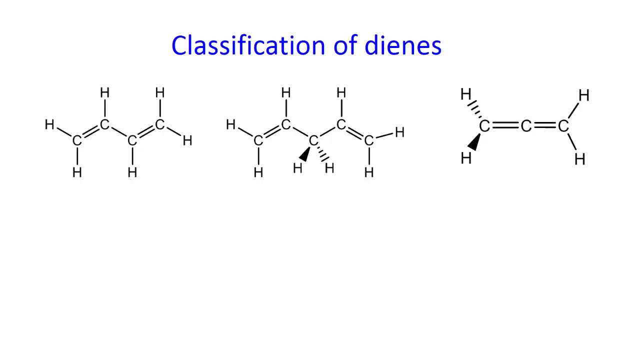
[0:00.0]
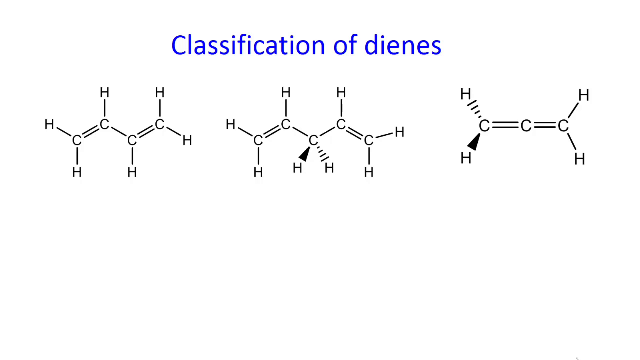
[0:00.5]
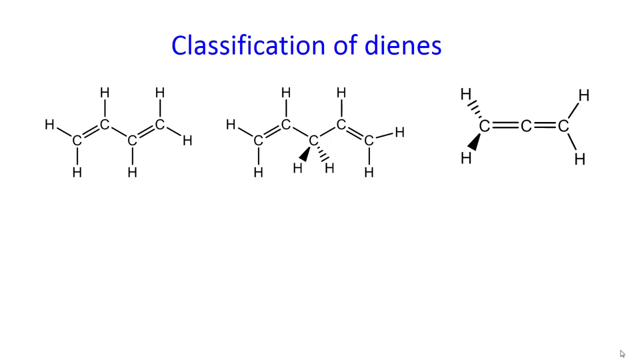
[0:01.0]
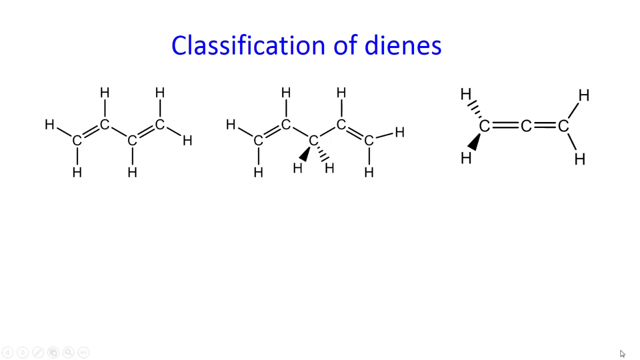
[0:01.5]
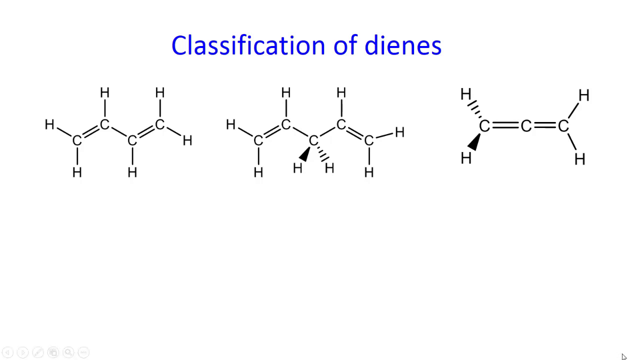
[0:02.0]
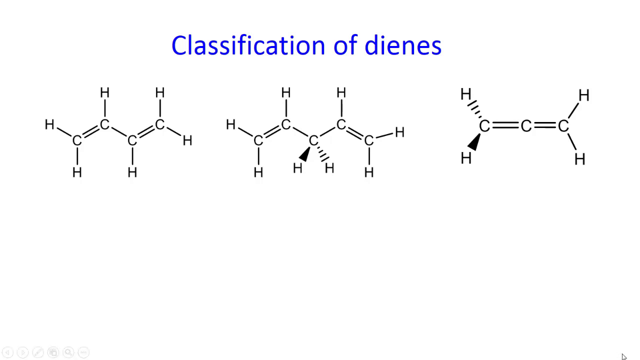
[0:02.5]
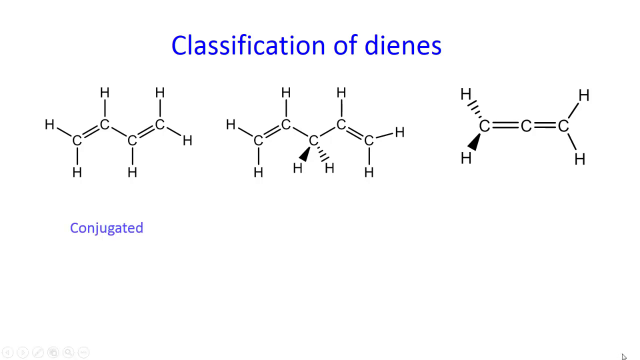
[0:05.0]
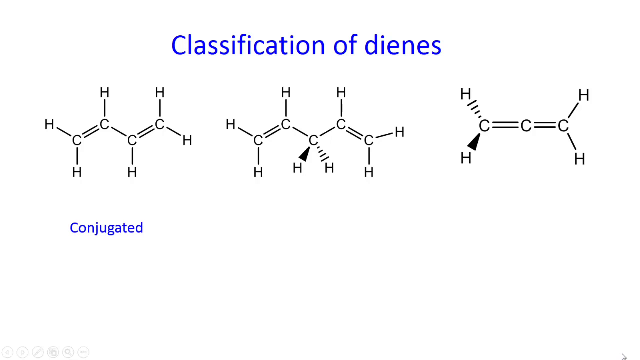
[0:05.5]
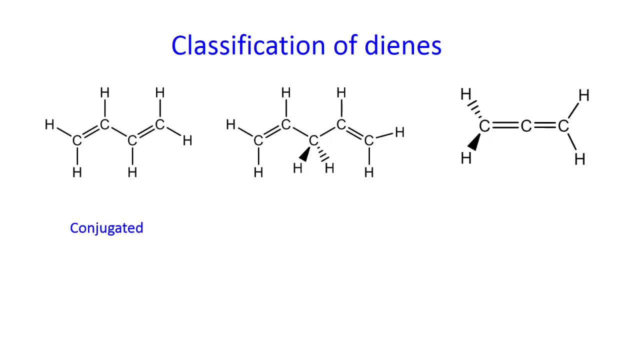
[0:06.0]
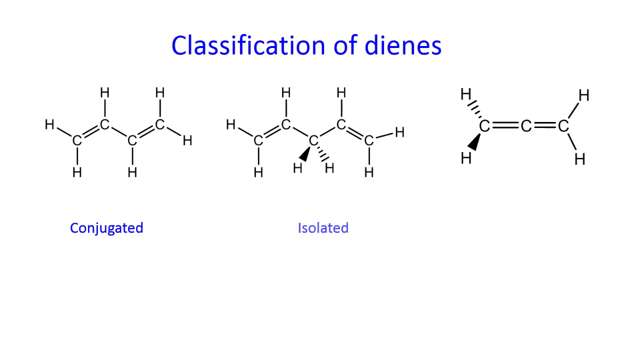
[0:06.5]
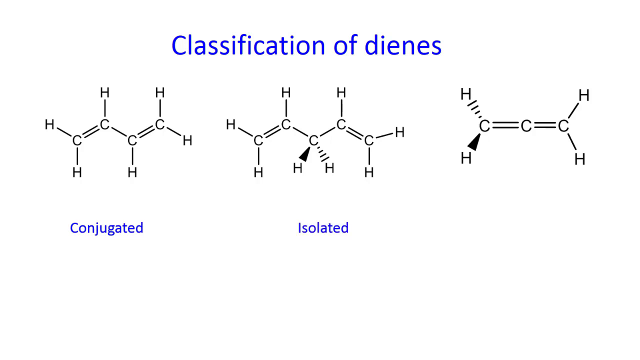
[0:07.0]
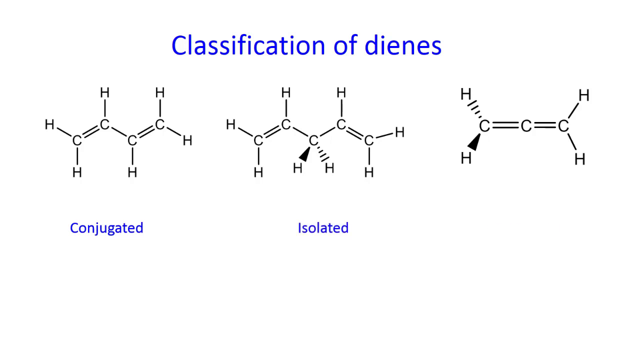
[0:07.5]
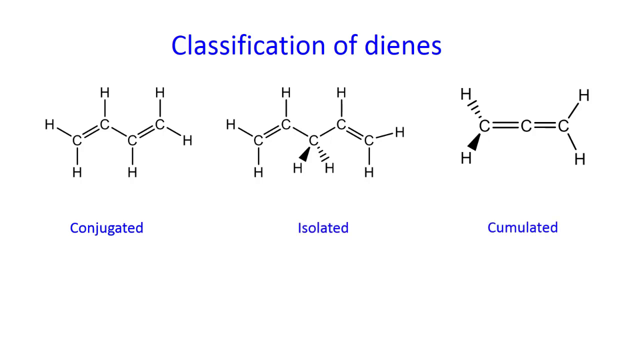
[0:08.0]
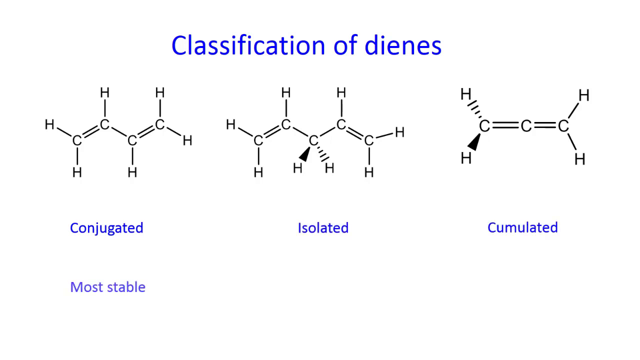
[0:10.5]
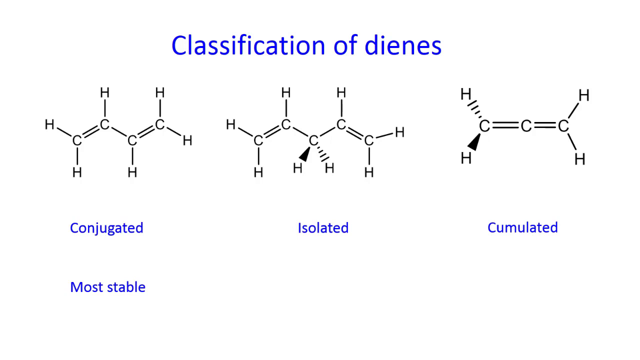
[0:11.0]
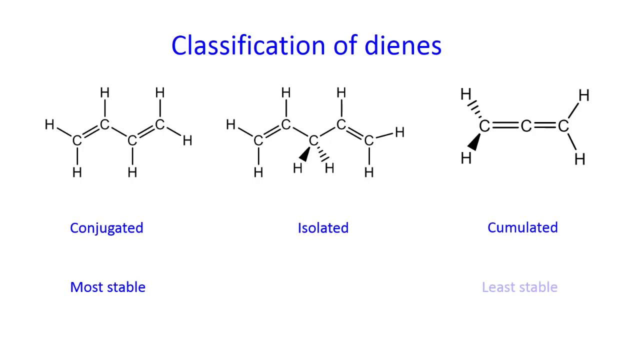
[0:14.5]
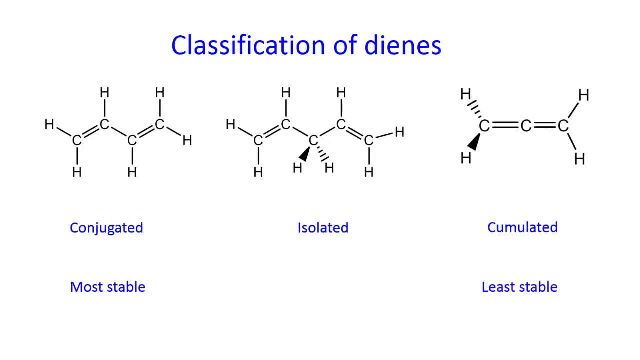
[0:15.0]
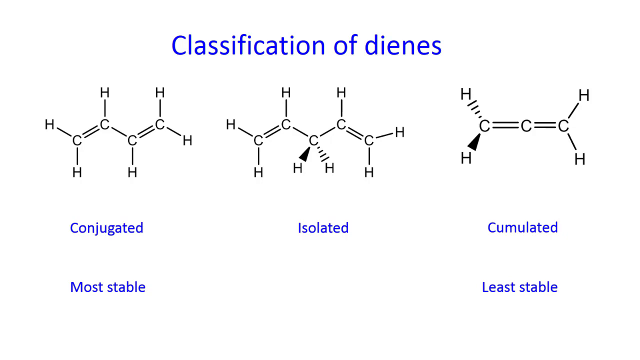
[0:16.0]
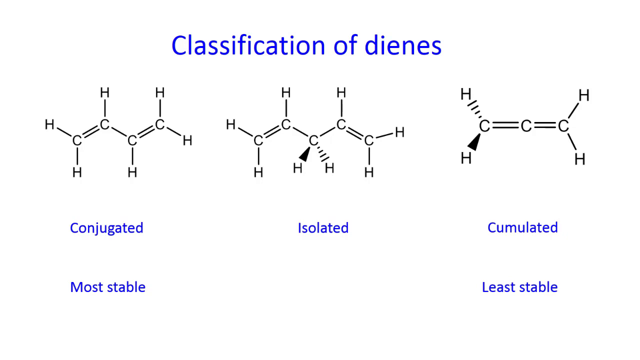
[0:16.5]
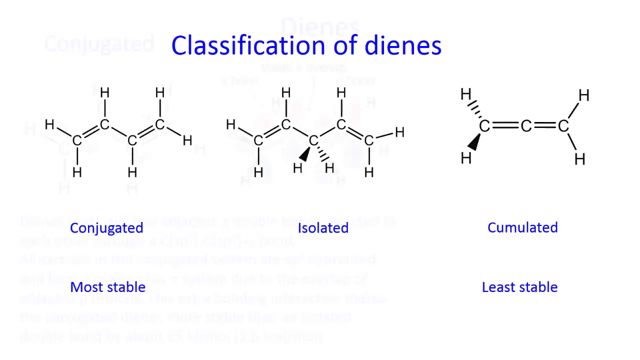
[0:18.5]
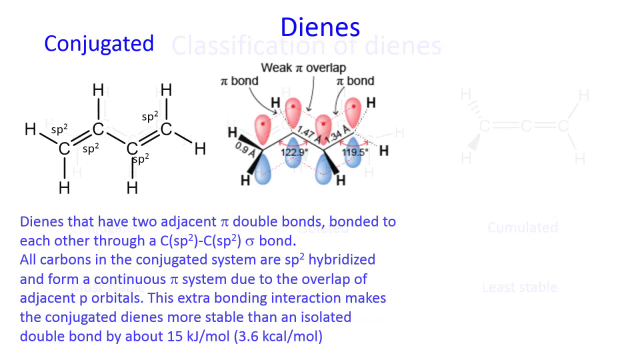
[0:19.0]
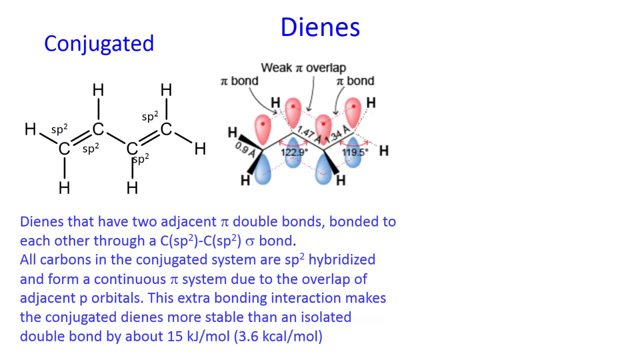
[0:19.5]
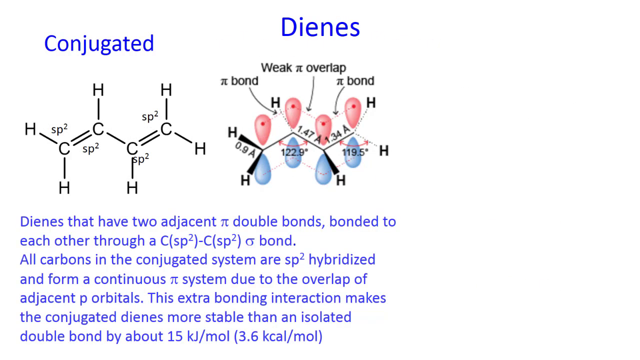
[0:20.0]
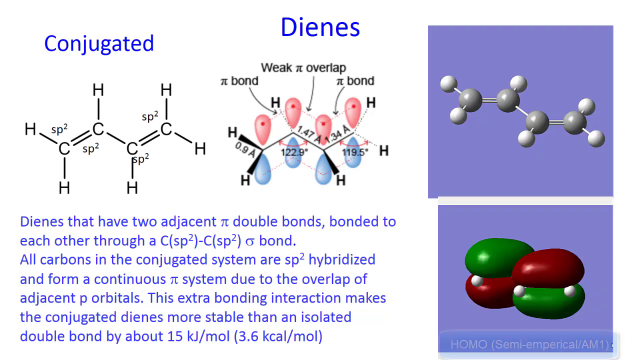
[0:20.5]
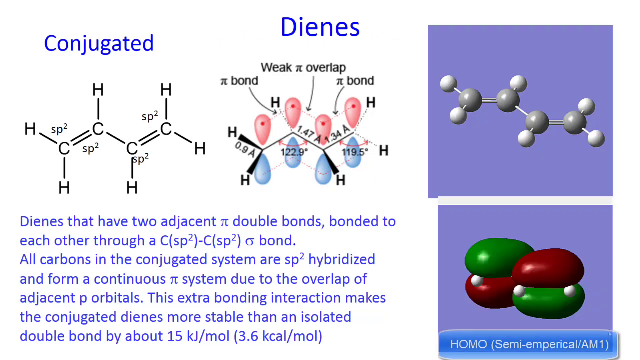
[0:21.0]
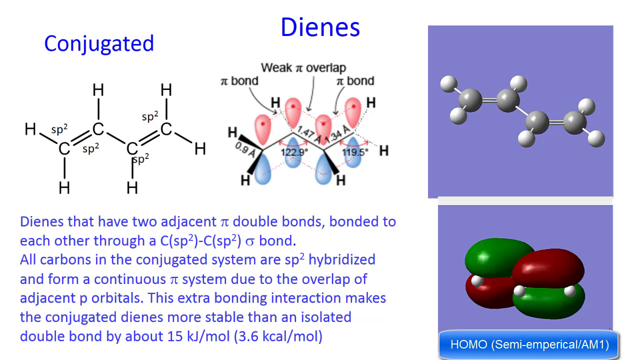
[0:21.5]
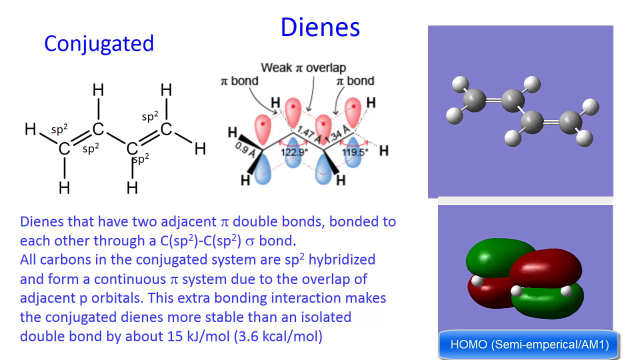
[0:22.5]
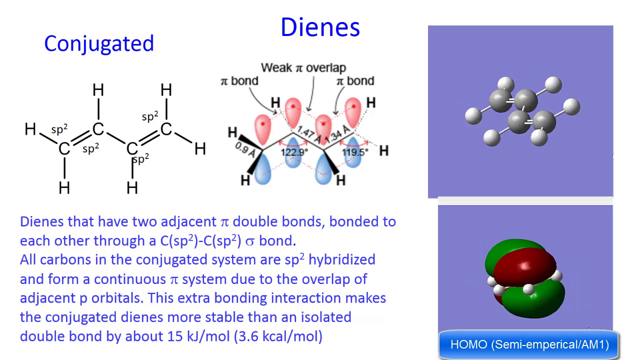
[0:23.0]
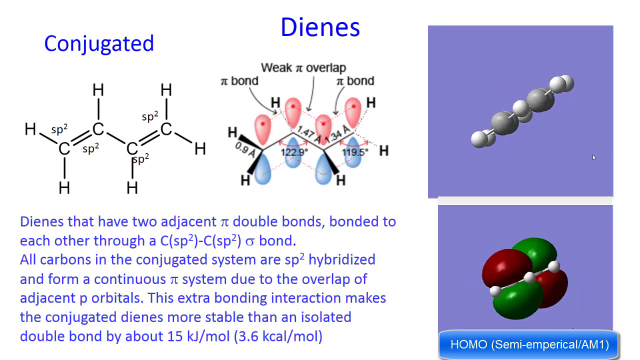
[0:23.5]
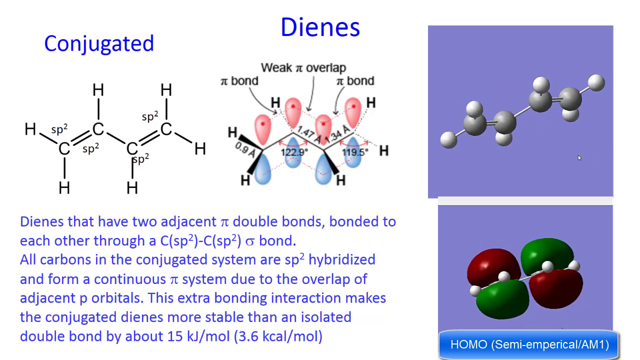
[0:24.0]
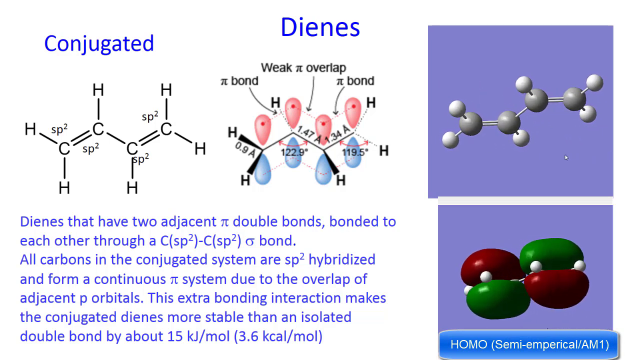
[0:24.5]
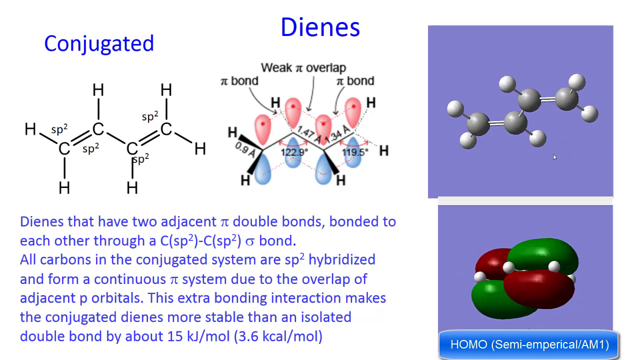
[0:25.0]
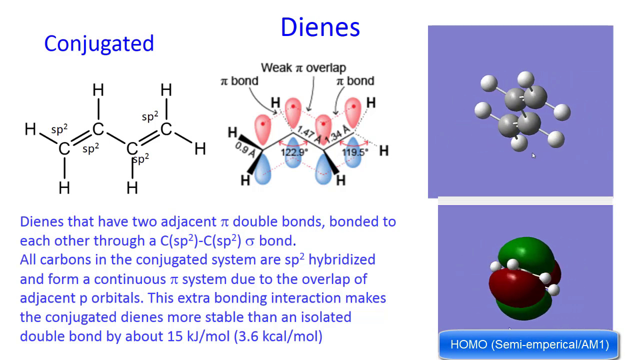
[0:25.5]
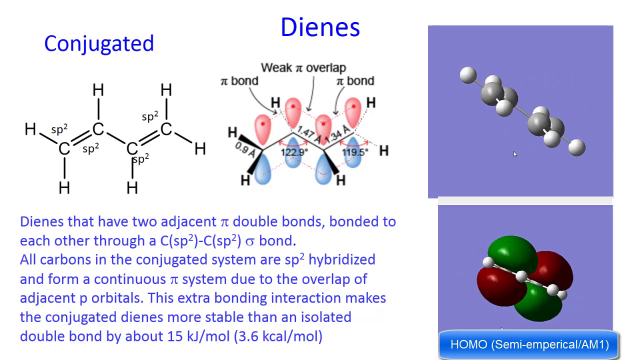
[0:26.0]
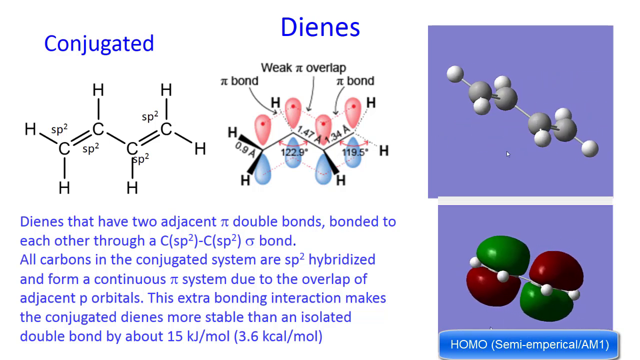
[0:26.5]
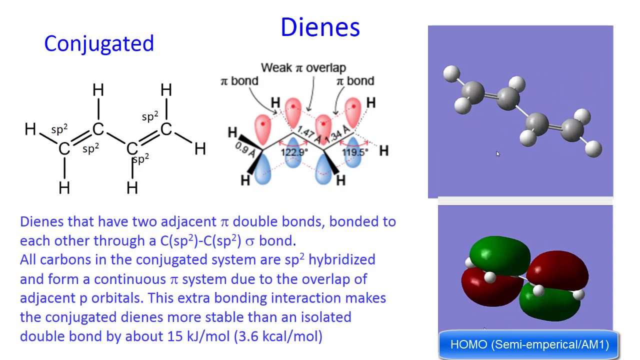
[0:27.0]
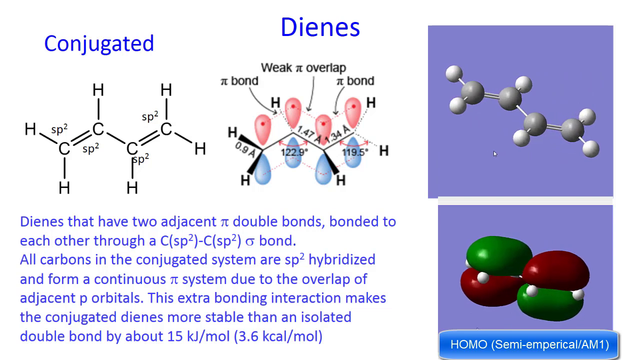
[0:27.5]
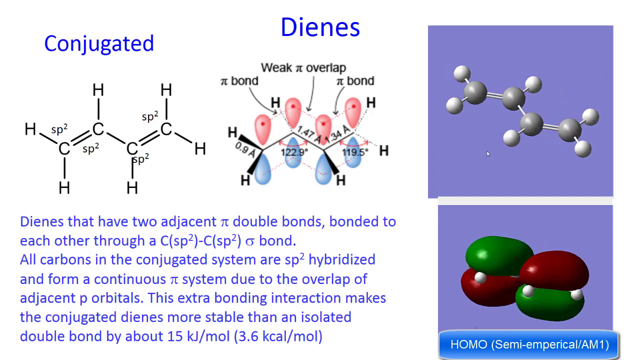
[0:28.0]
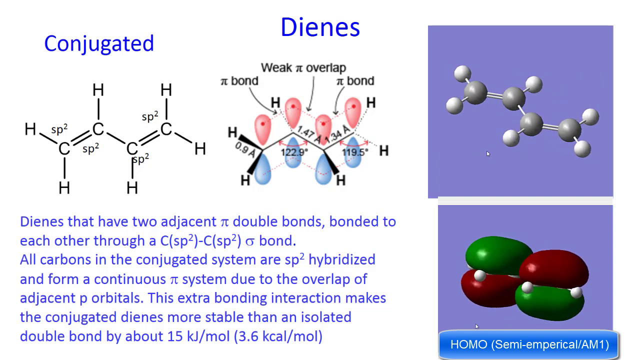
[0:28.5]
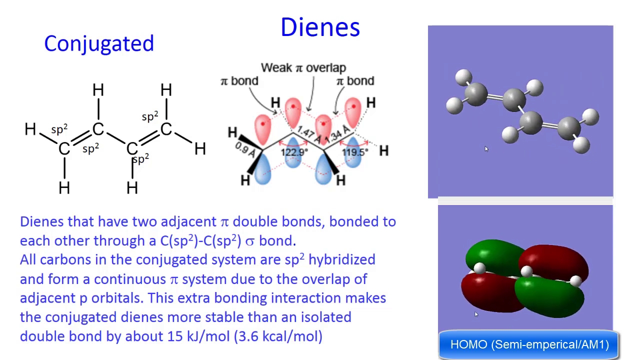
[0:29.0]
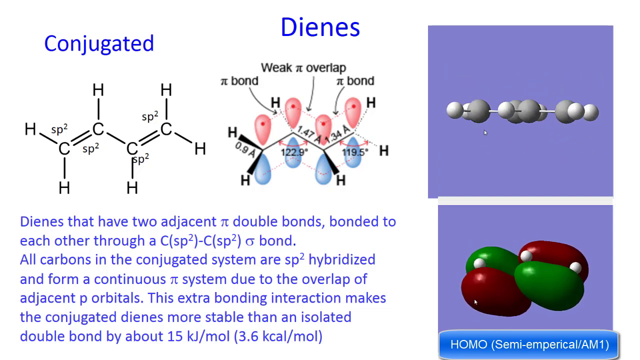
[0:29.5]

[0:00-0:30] Text on the screen presents a classification of dienes, molecules made only of carbon and hydrogen. Three classes are listed: conjugated, isolated and cumulated, with conjugated dienes marked as the most stable and cumulated dienes as the least stable. A section on conjugated dienes describes them as dienes that have two adjacent double bonds bonded to each other through a carbon sigma bond, says that "all carbons in the conjugated system" are hybridized and form a continuous π-system due to the overlap of adjacent p-orbitals, and states that this extra bonding interaction makes conjugated dienes more stable than an isolated diene bond by "about 15 kJ per mole, 3.6 kcal per mole."